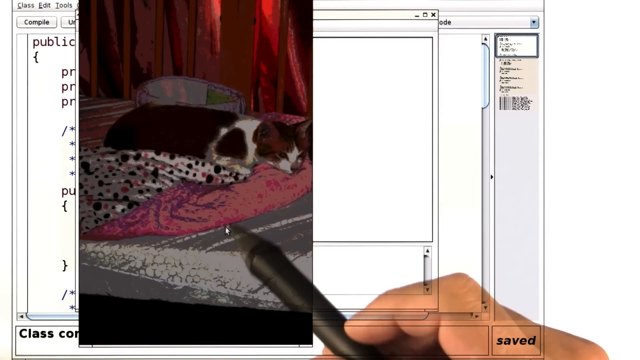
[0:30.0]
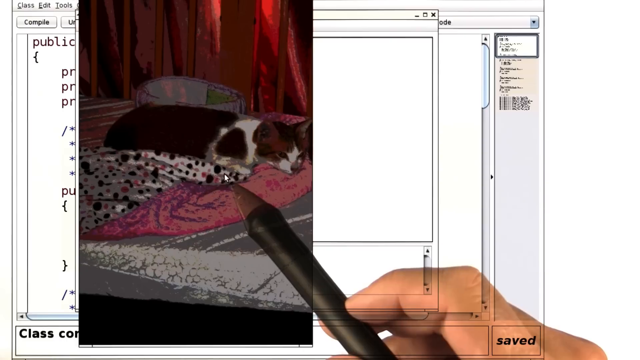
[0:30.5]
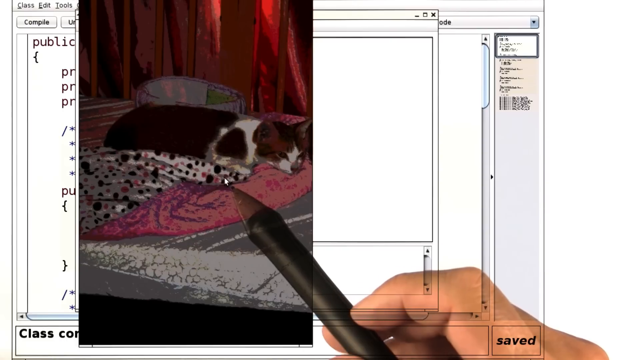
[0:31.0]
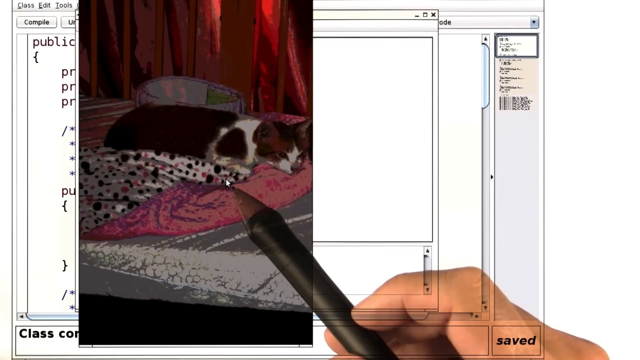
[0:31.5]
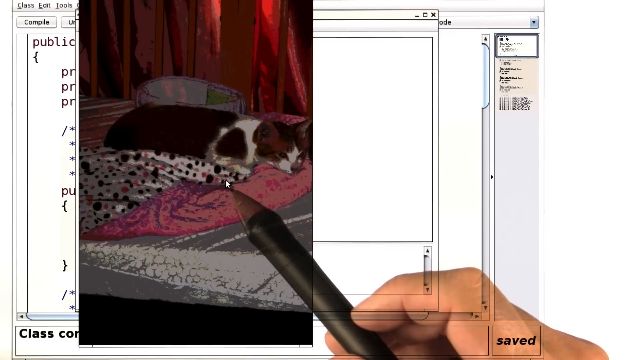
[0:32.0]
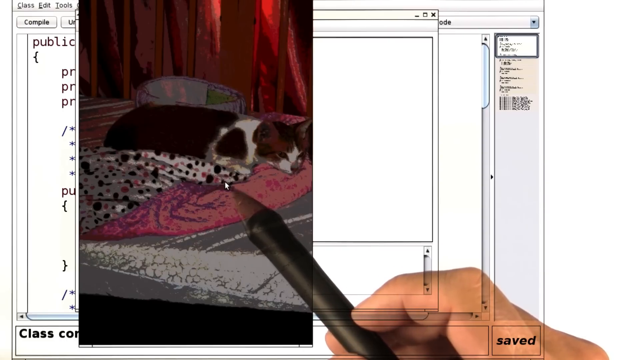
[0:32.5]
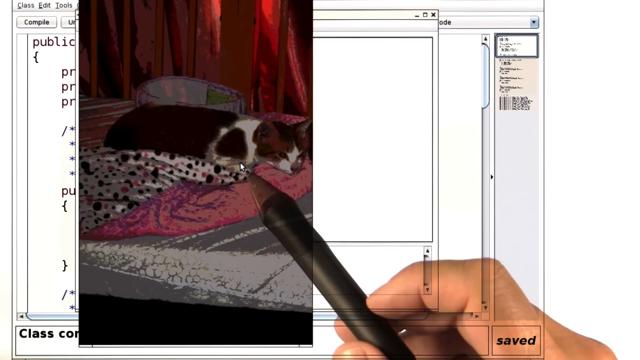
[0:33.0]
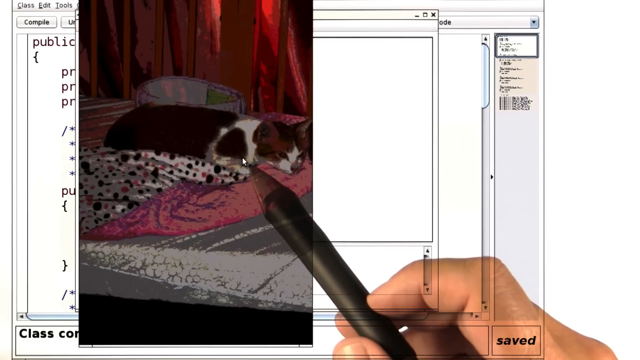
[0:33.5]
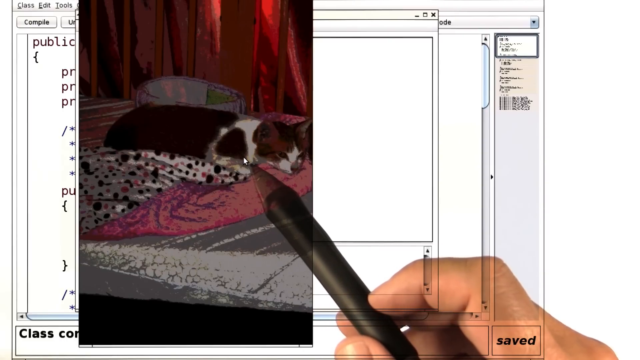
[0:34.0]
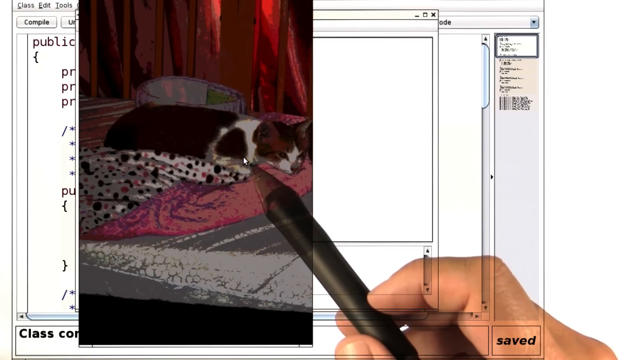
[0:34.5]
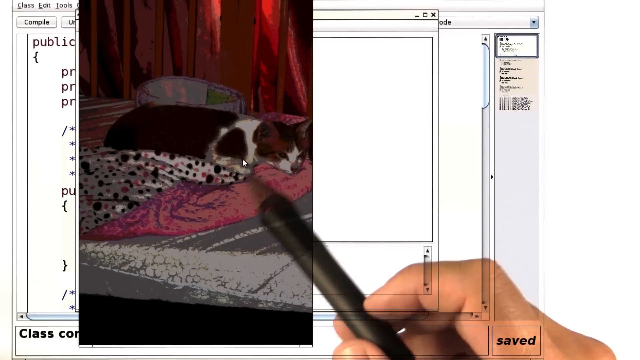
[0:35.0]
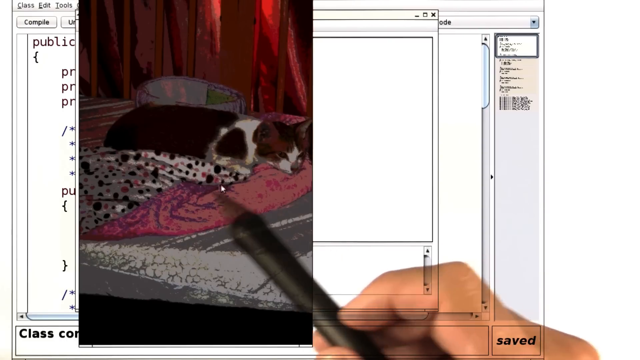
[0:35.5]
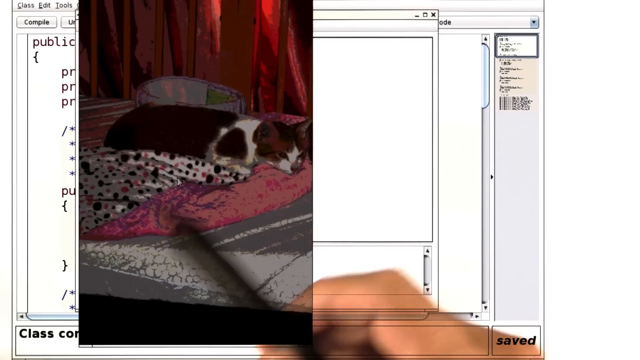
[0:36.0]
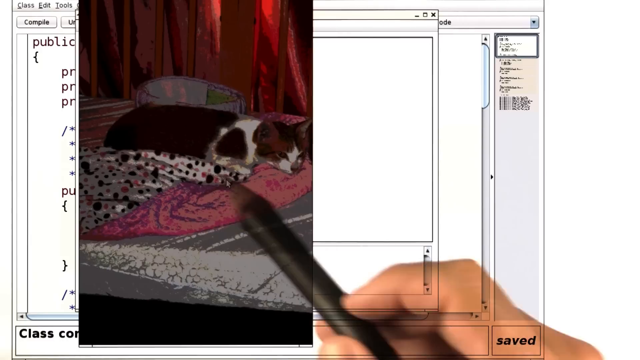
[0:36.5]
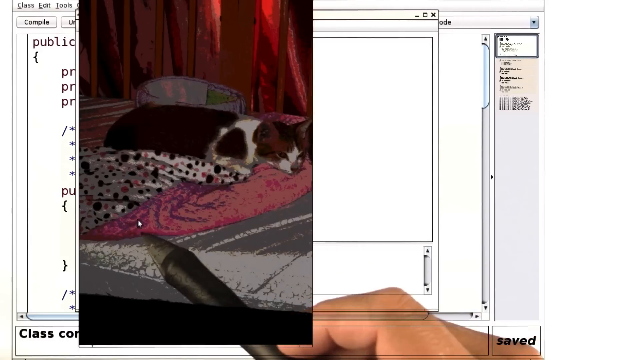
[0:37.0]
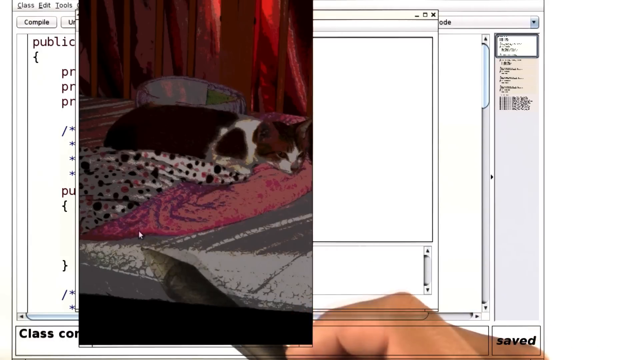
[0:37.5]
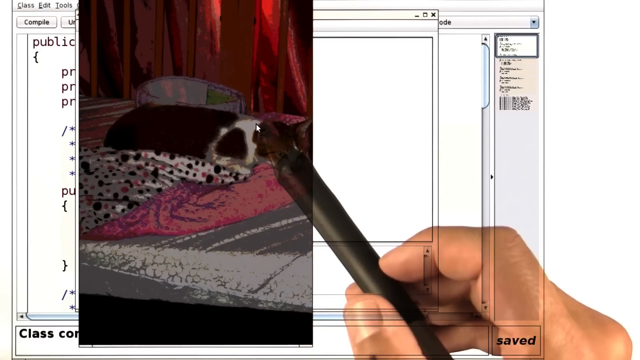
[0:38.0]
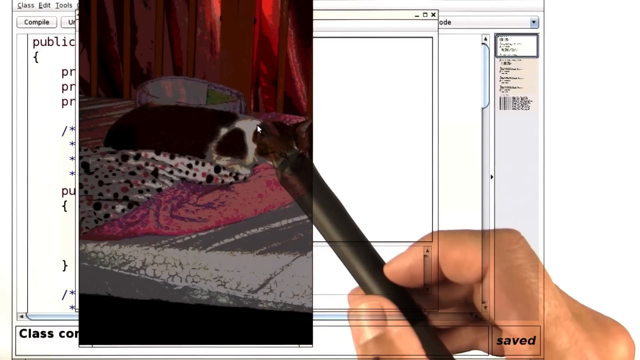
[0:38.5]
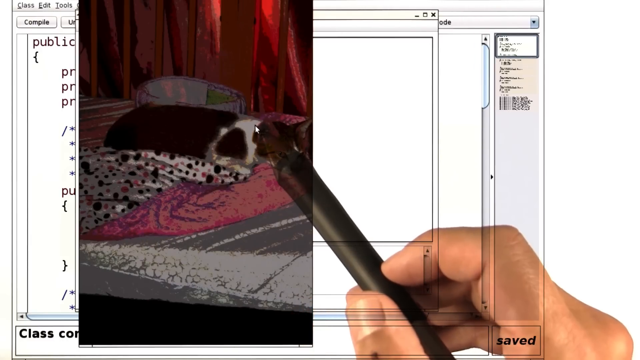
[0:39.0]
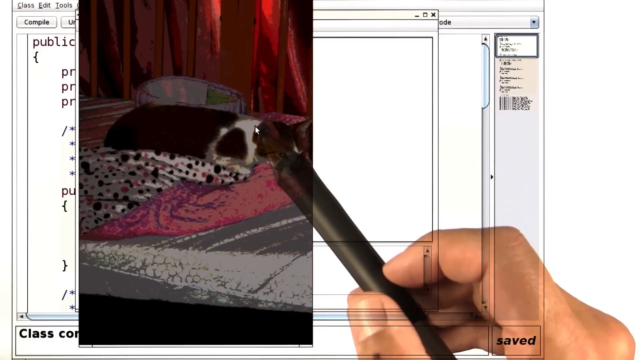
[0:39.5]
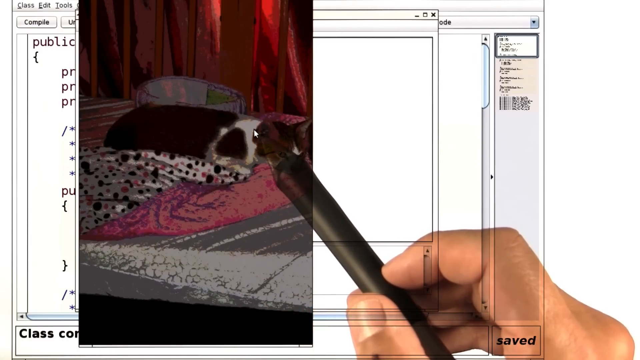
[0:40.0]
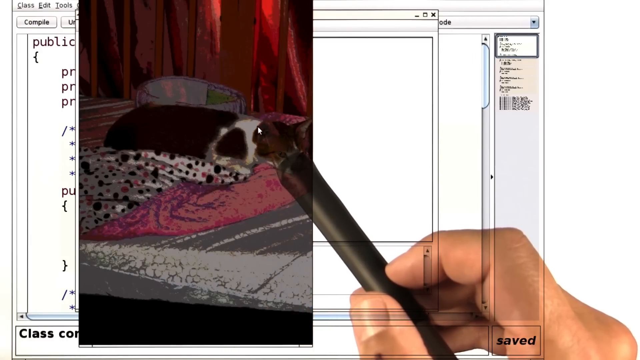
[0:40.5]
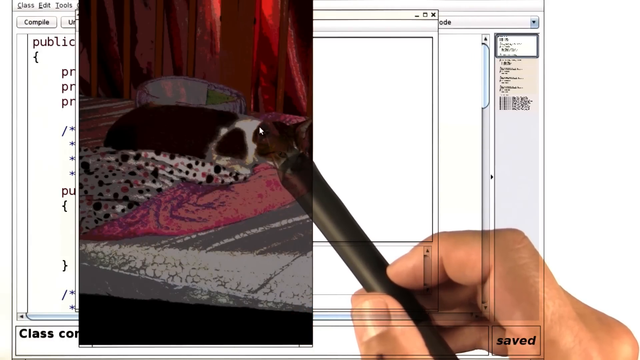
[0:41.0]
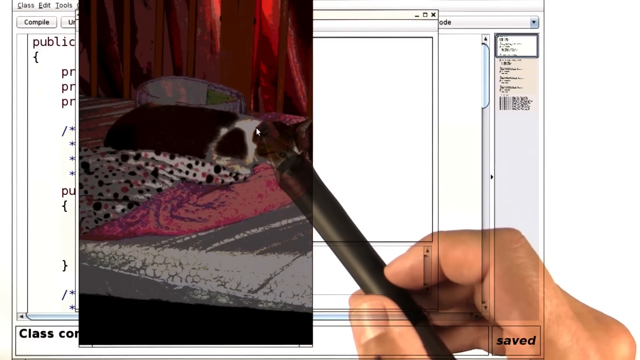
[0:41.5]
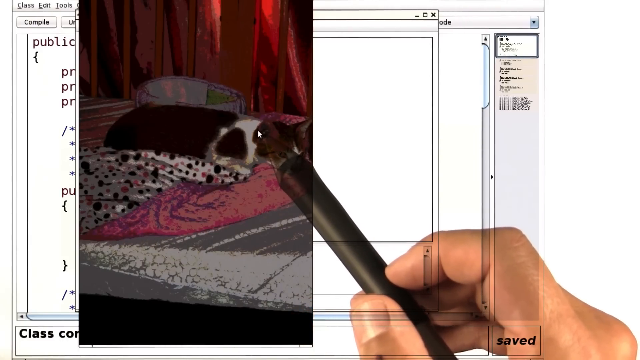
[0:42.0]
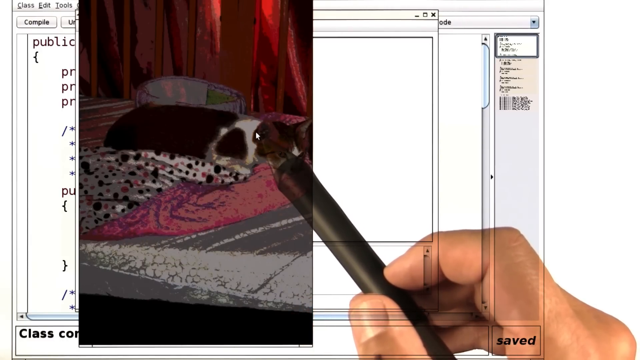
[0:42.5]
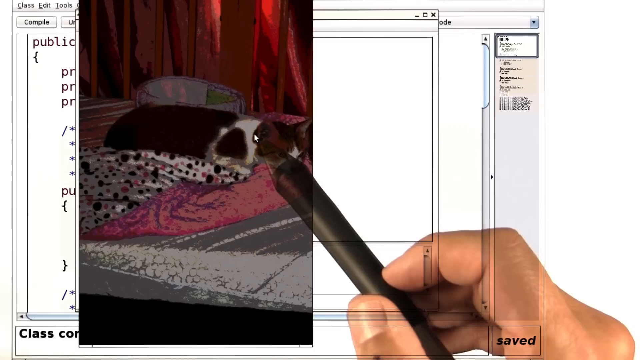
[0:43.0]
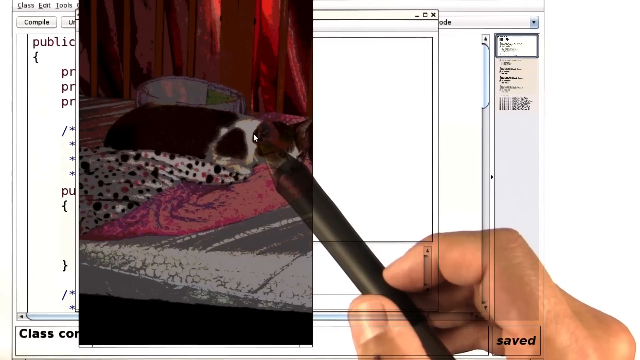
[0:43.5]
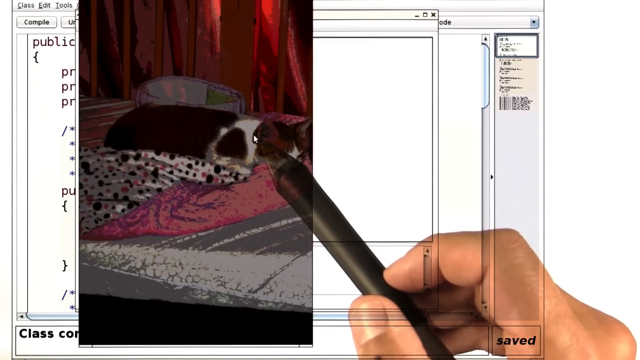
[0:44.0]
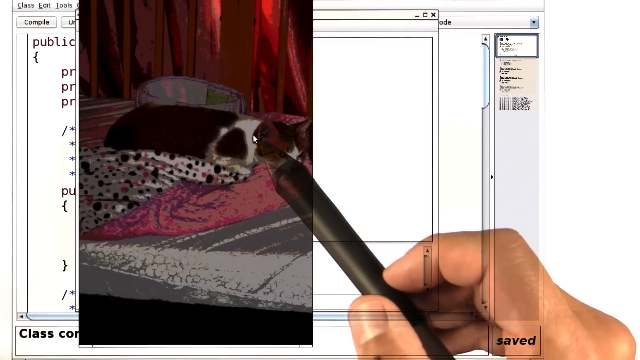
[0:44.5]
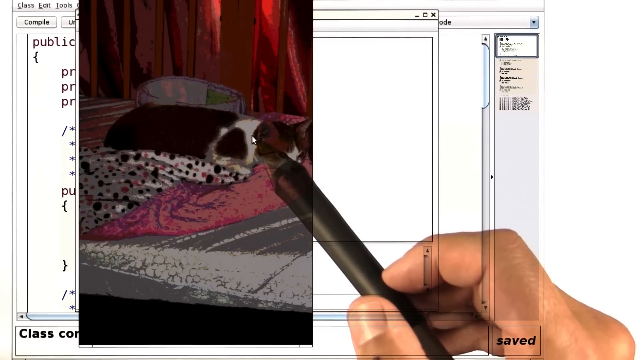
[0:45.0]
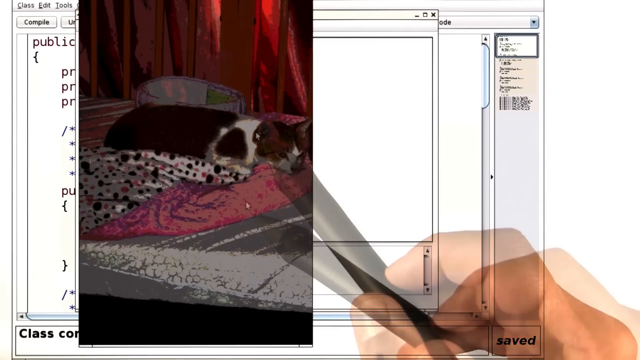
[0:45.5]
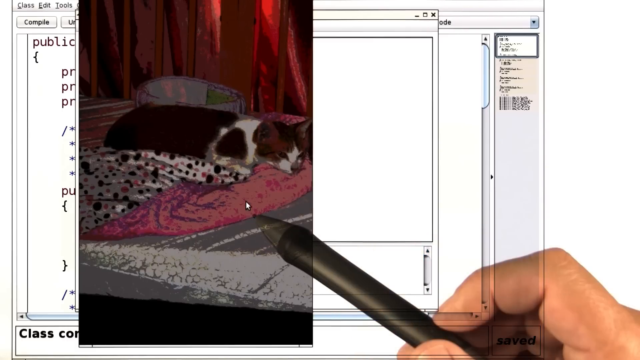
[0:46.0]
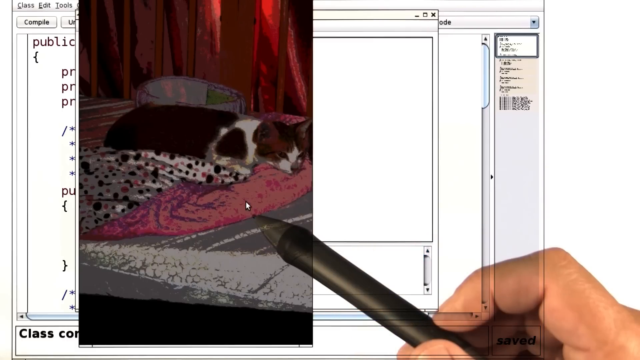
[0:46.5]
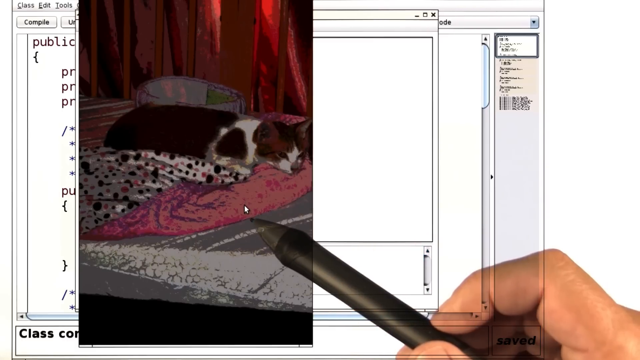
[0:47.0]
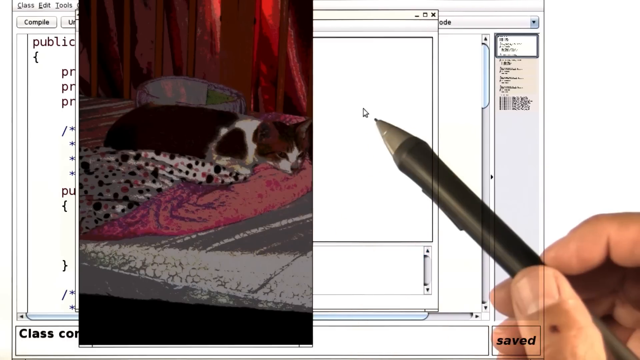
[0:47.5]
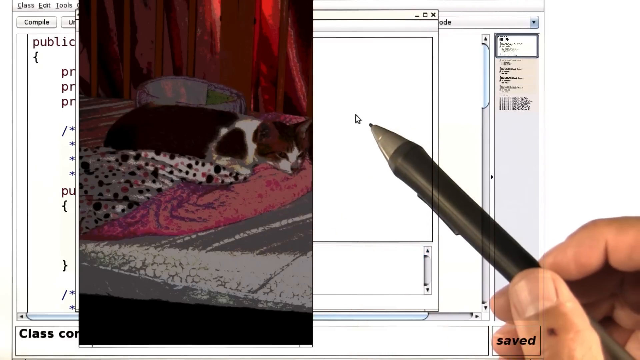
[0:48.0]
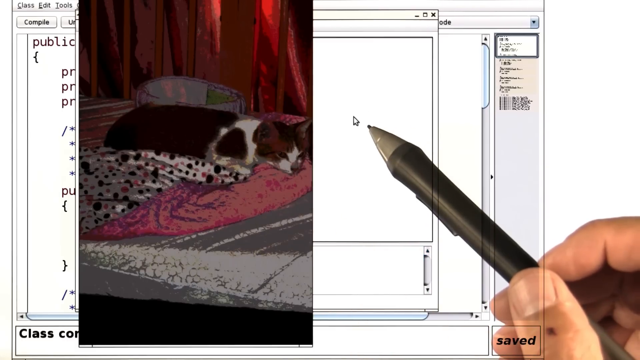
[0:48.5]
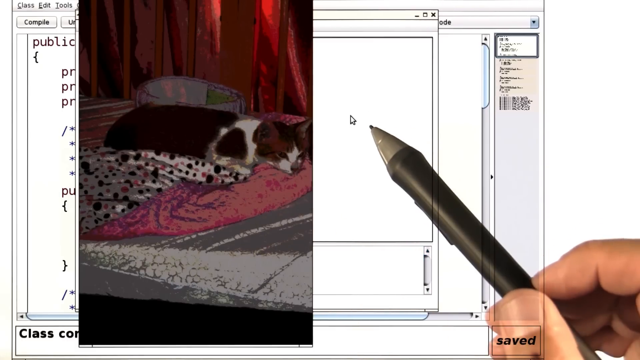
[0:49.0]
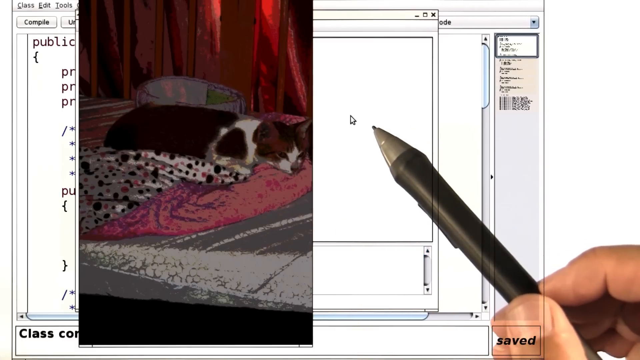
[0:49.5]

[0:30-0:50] A photograph of Eliza the cat is on the screen. The person uses a pointer to tap on the picture and move it. They appear to circle something on the picture directly beside Eliza, by the blanket she is lying on, and then move back out. Enlarged, the picture shows Eliza lying on bedding: what looks like pink bedding and what looks like pink and black polka dot bedding.